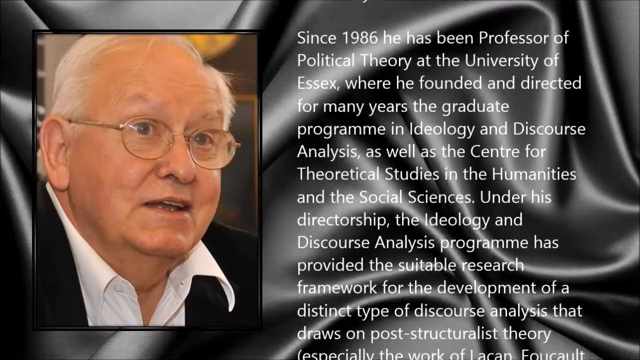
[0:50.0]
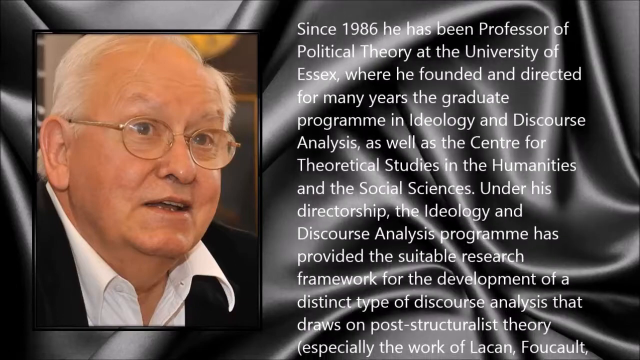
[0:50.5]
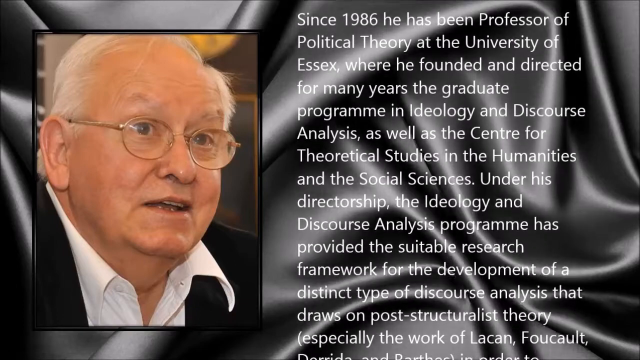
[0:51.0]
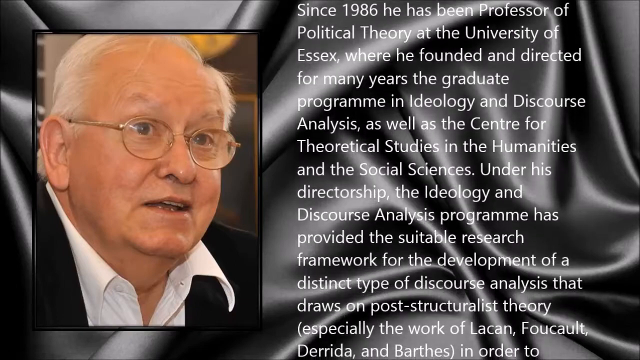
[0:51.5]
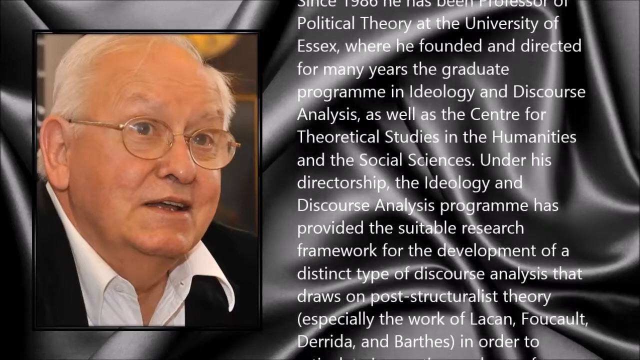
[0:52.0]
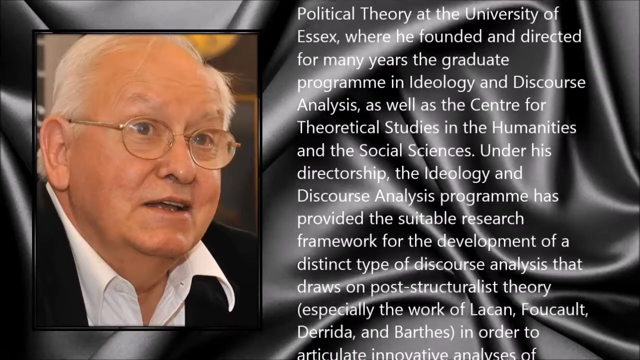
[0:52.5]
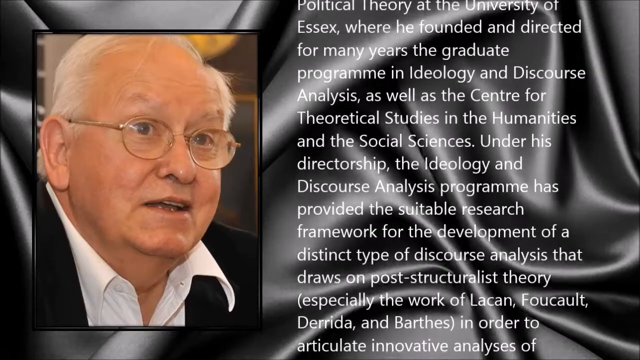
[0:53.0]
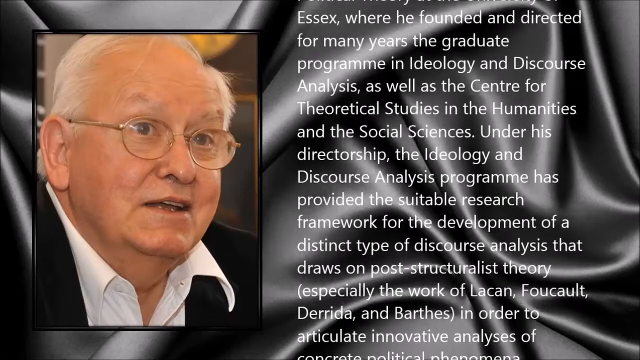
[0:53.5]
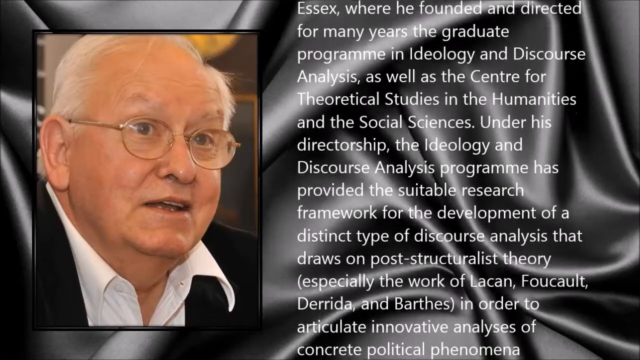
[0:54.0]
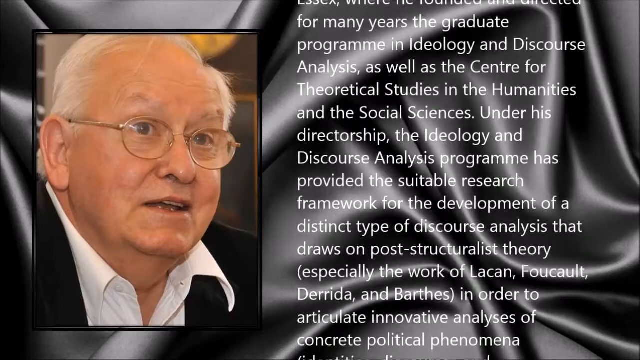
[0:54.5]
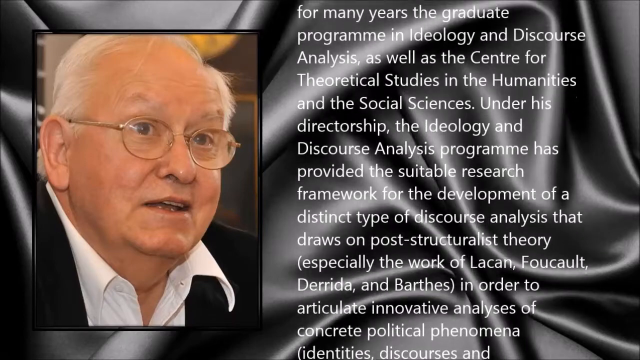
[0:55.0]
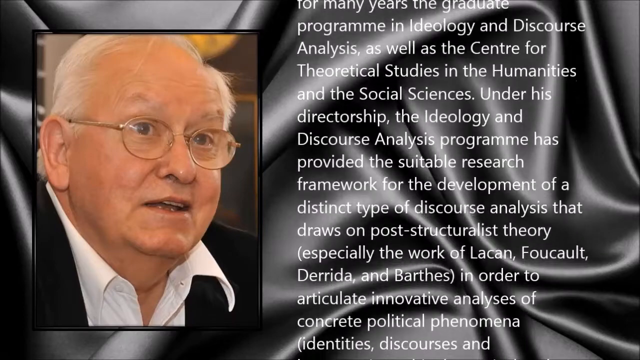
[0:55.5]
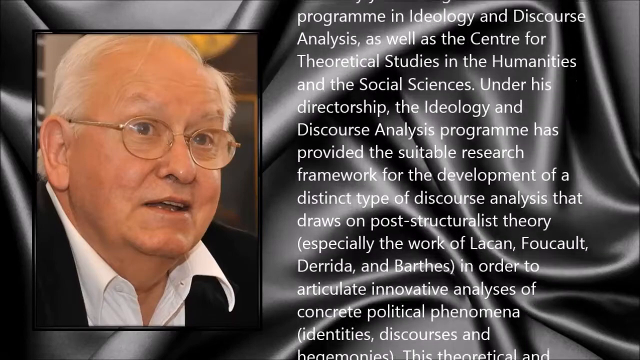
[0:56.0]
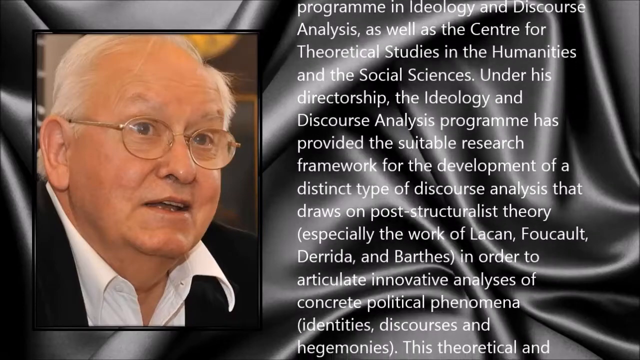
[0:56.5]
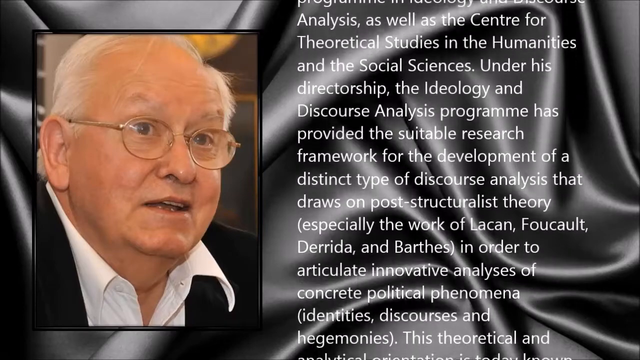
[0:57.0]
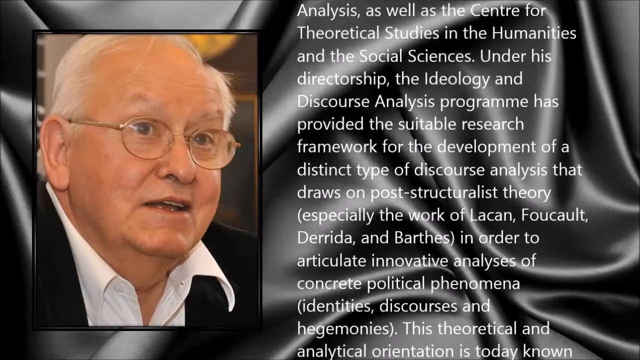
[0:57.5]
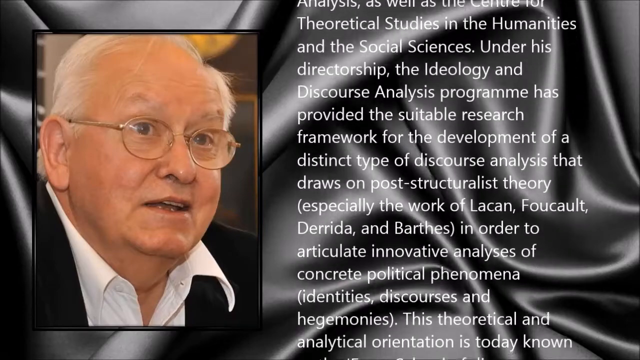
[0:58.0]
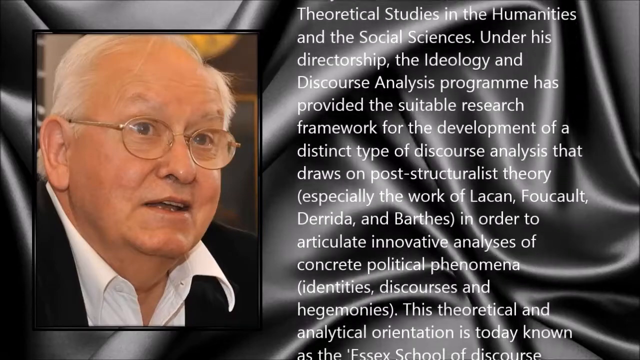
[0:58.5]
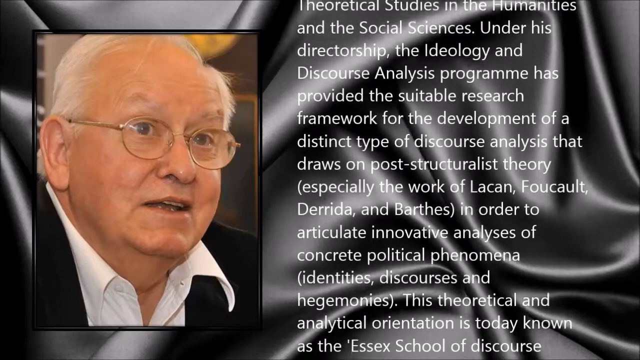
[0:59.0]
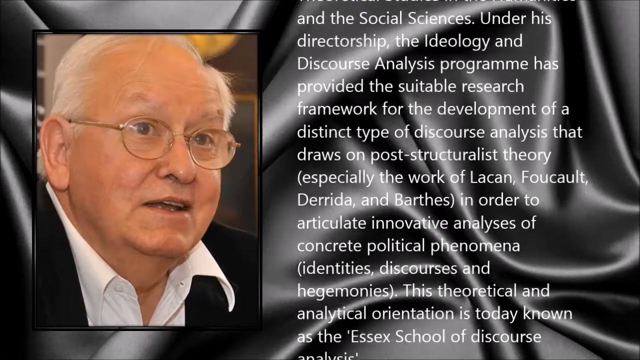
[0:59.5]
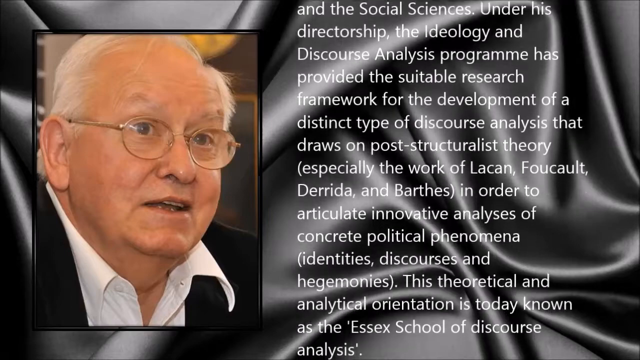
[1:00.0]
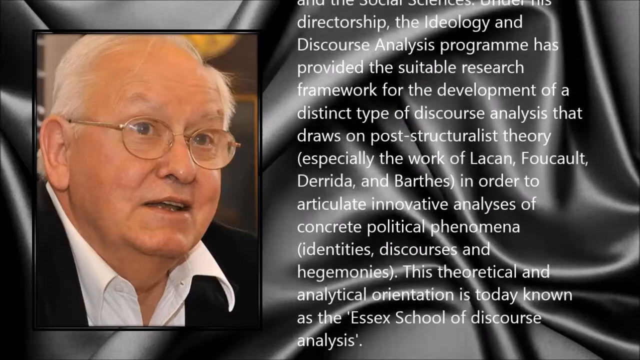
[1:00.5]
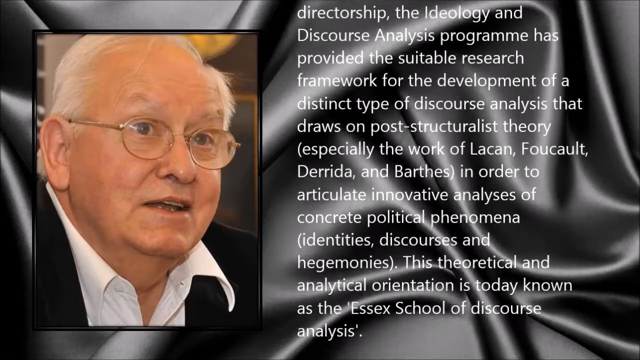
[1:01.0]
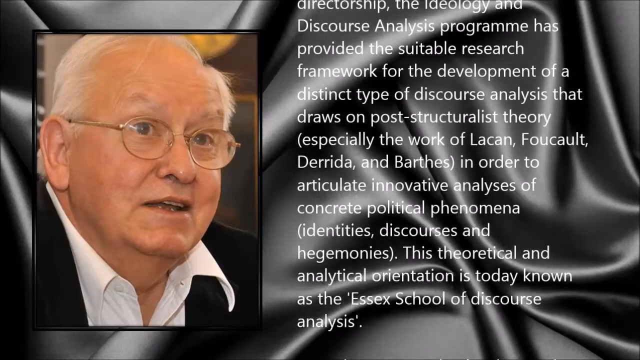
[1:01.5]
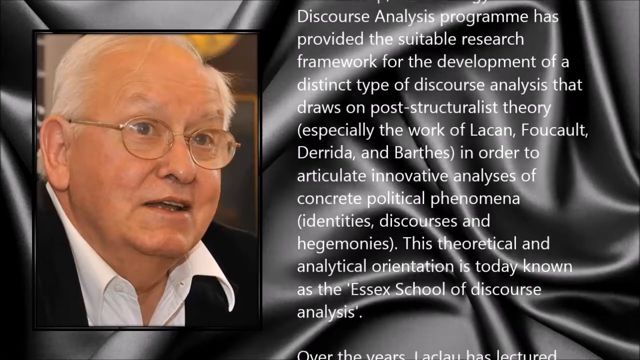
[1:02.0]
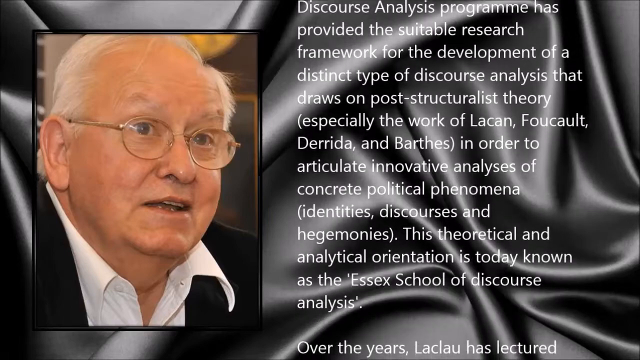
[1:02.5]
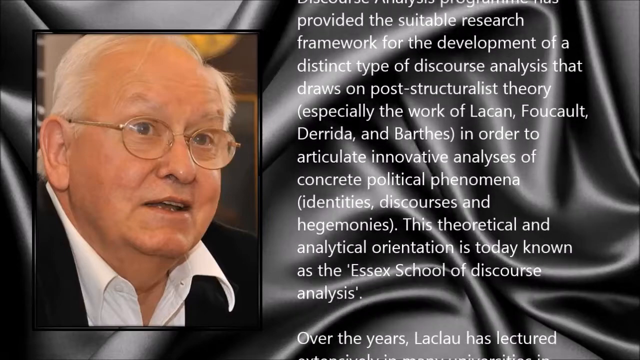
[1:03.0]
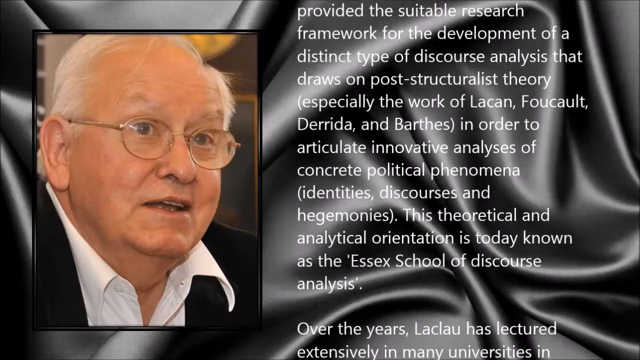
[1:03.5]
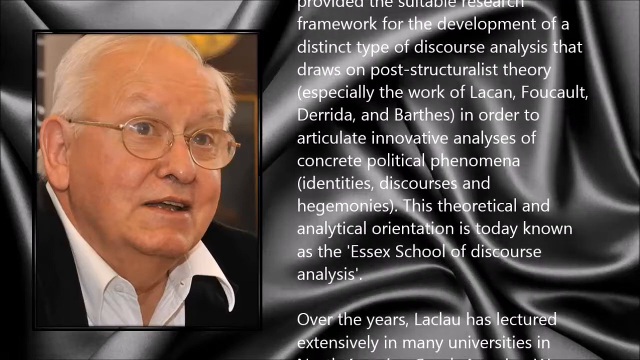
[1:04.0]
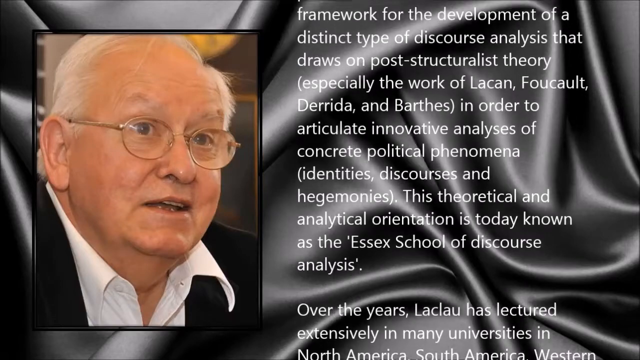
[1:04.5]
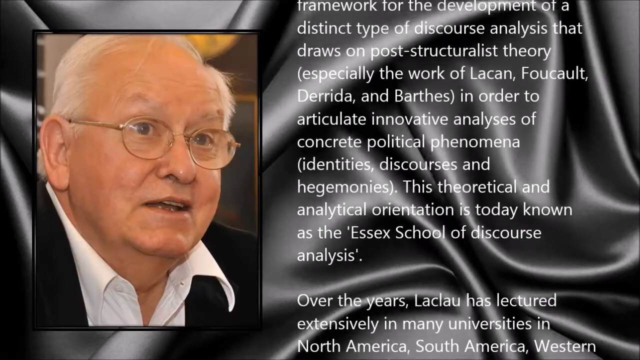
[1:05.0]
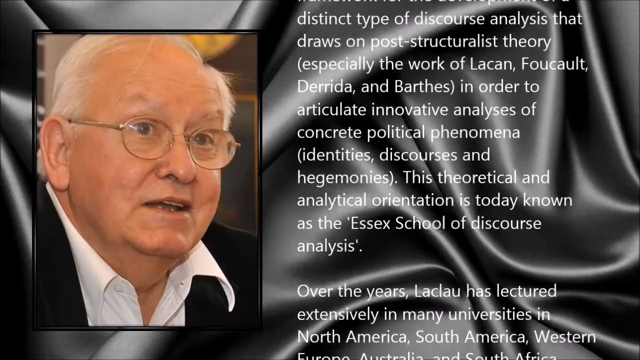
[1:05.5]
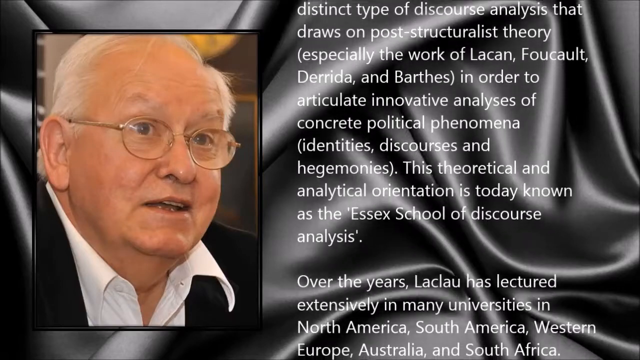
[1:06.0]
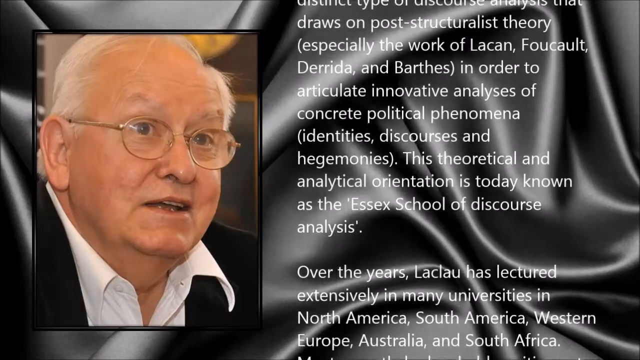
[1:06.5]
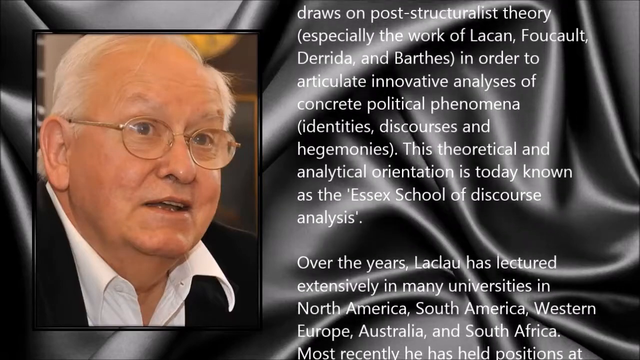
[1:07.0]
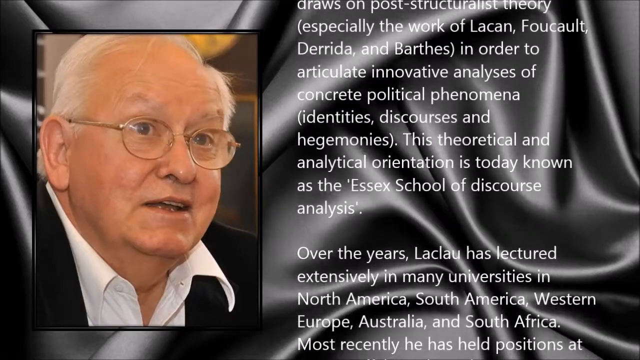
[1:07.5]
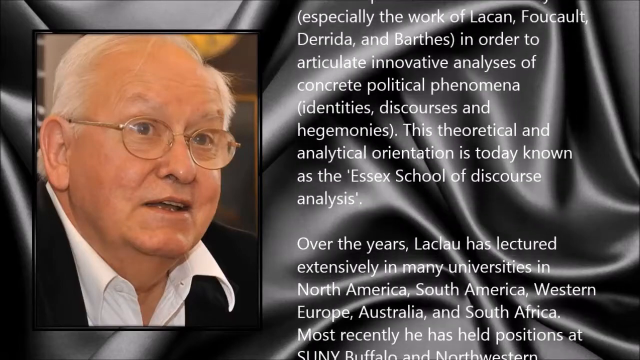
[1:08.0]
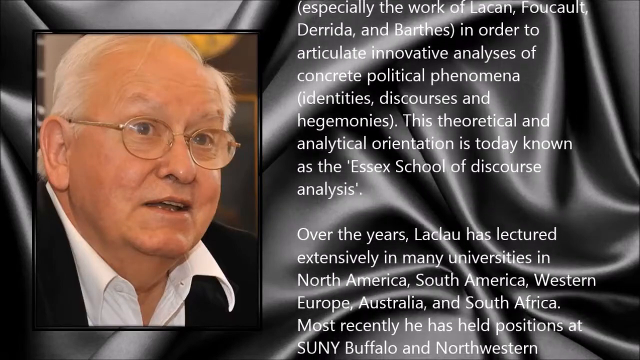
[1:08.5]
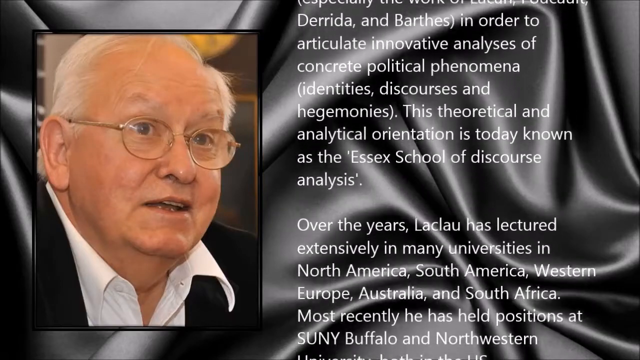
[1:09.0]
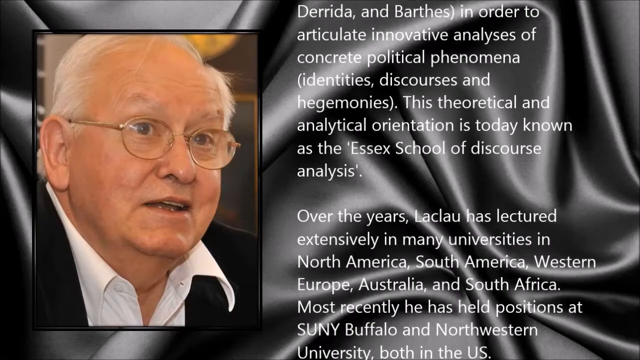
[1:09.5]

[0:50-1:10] A picture of a man who is being memorialized is shown while a write-up scrolls up the screen very fast next to his picture, covering how he was a professor, where he went to school, what he studied and the programs he brought out. It says he is known today for the Essex School of Discourse Analysis. He is an older white man with gray hair, glasses, a white button-down shirt and a black blazer; he is looking at something with his mouth open. It is not clear from the write-up whether he is deceased. Behind him is a satiny, silky backdrop, material that looks like it is laying on a level surface.